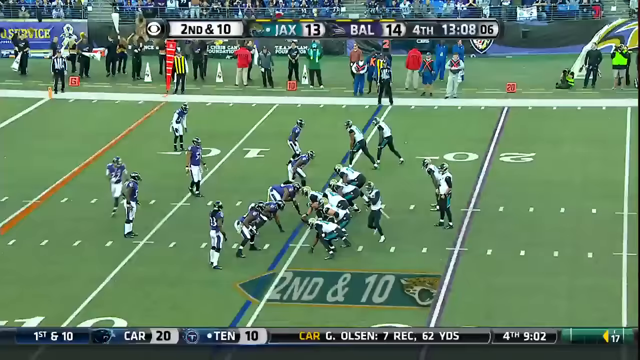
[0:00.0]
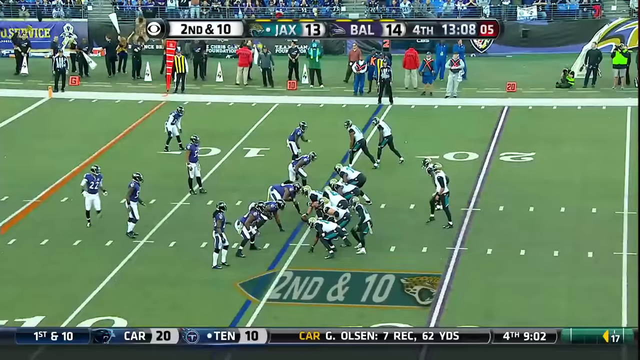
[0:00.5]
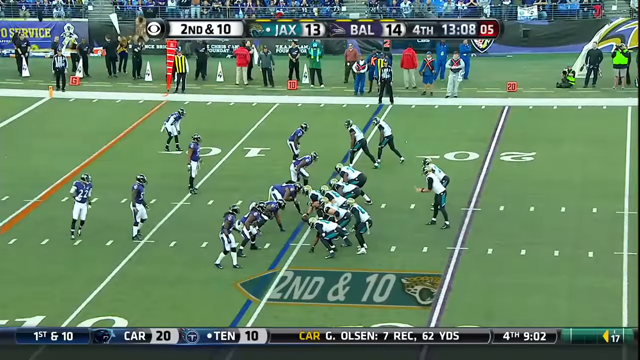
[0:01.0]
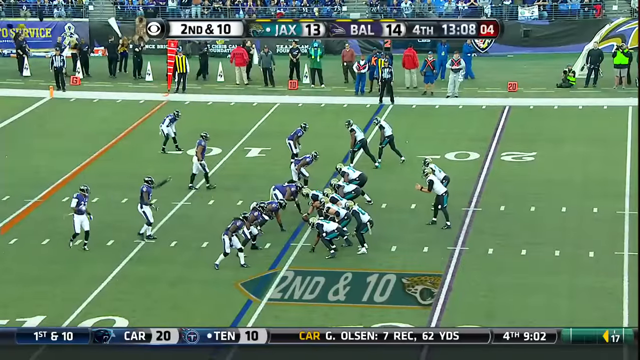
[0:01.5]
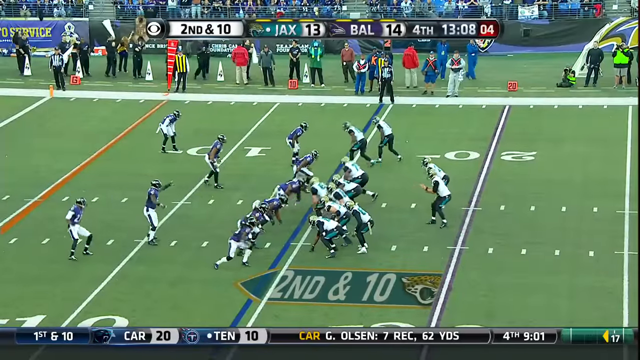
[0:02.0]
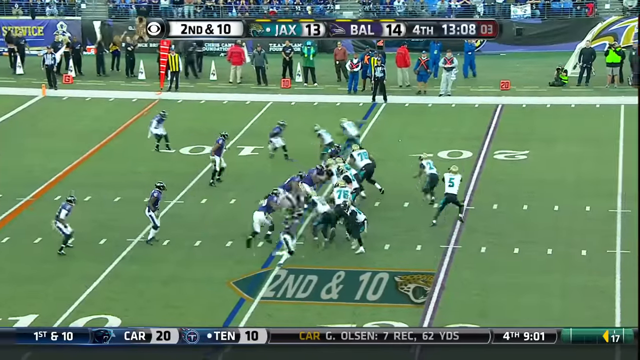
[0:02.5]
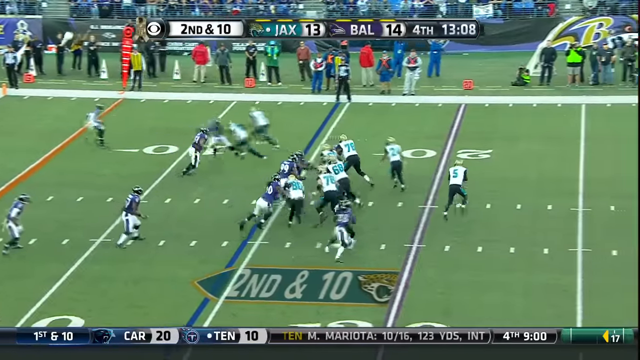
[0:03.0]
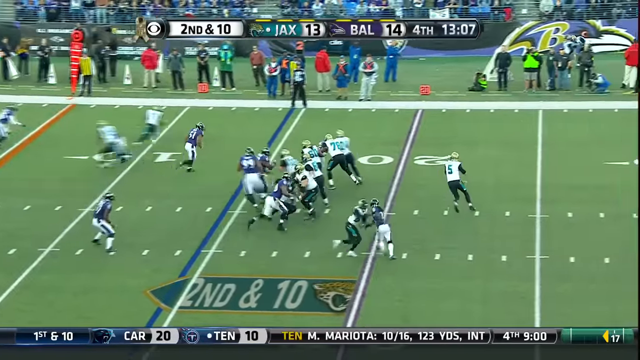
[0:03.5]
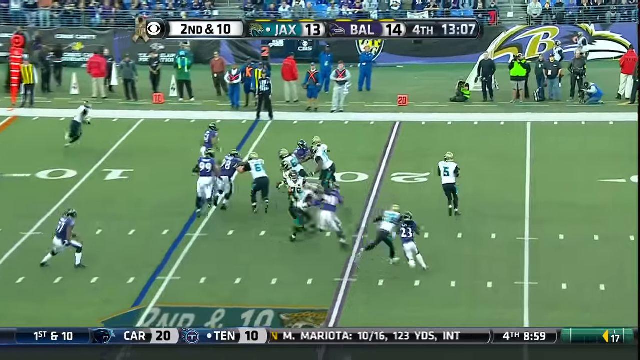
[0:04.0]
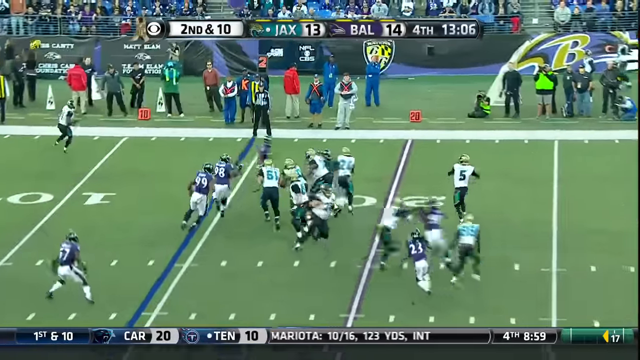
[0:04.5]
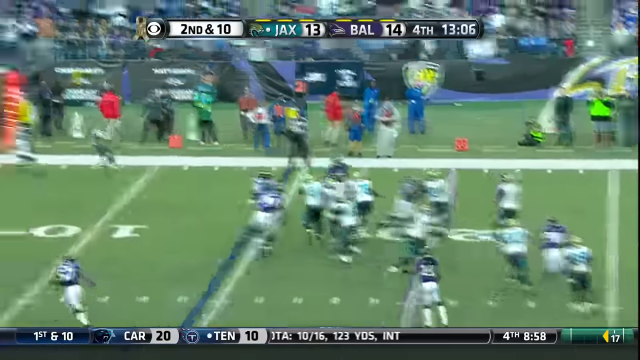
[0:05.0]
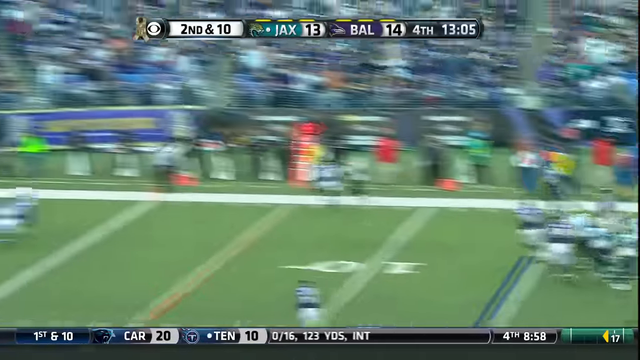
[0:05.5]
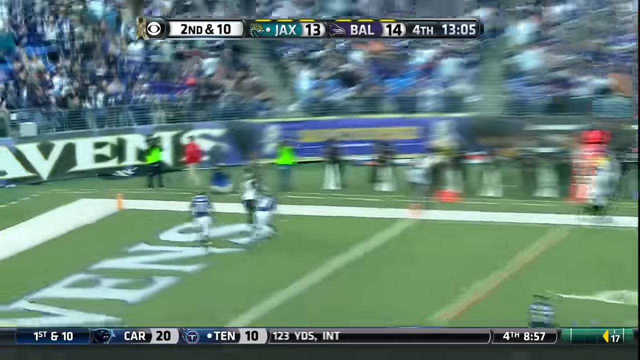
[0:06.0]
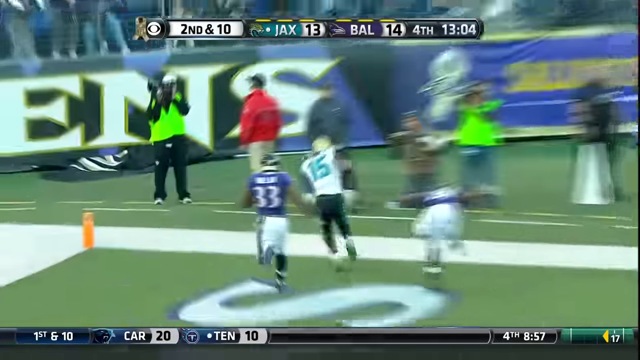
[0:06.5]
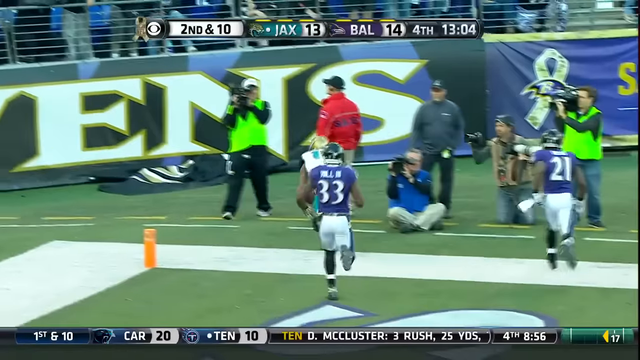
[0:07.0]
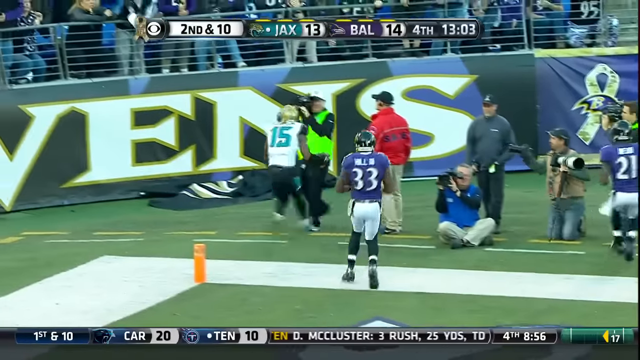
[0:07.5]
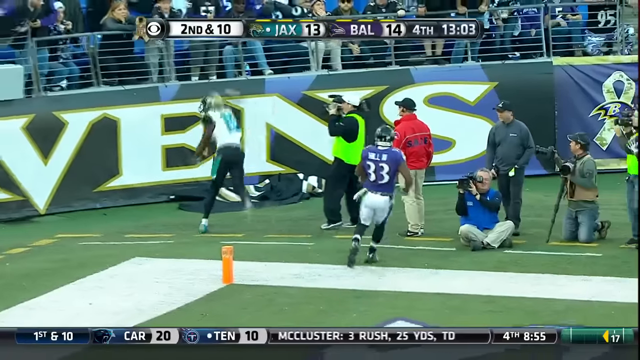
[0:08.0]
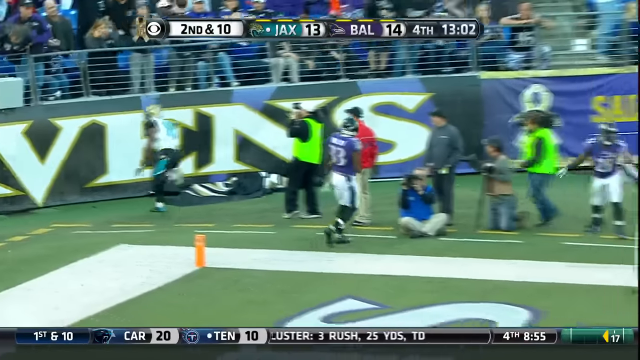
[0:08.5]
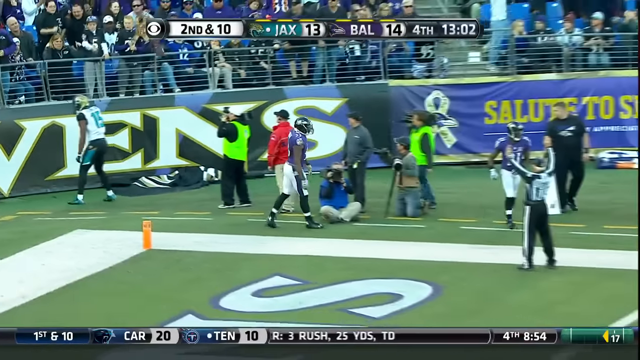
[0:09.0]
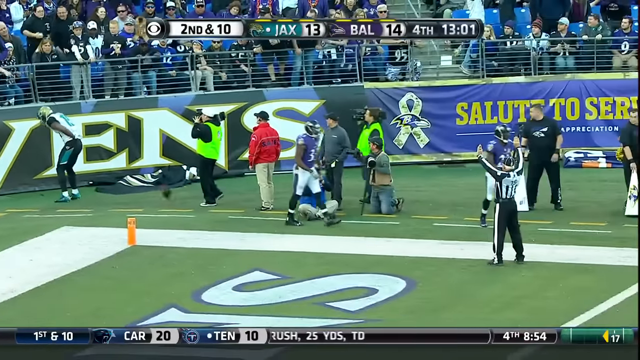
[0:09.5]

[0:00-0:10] A group of male American football players, around 16 to 20 and probably more, are on a football field, divided into two teams, one on either side. One team wears white shorts with blue trimmings on the side and blue tops that also have white; their numbers are written in bold on the back, with their names written right above the numbers. The other team wears black and green shorts with green trimmings on either side, as well as white shorts with green trimmings; their numbers are written on the back in green, with their surnames above in white. The setting stays on the football field throughout the video.